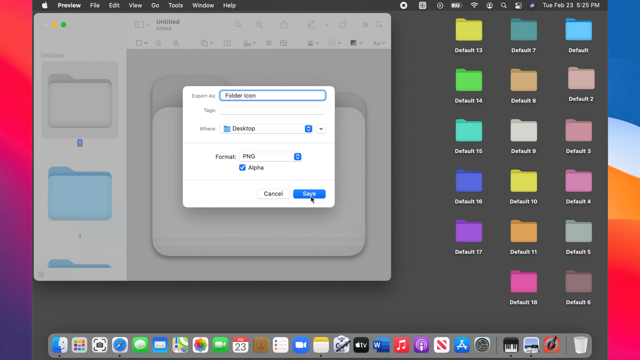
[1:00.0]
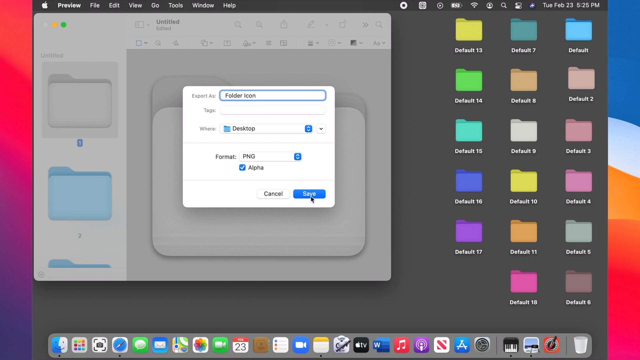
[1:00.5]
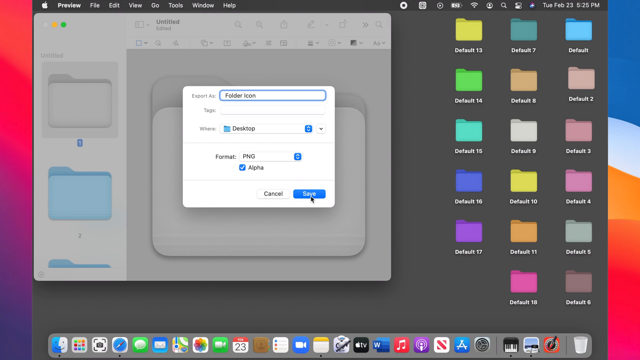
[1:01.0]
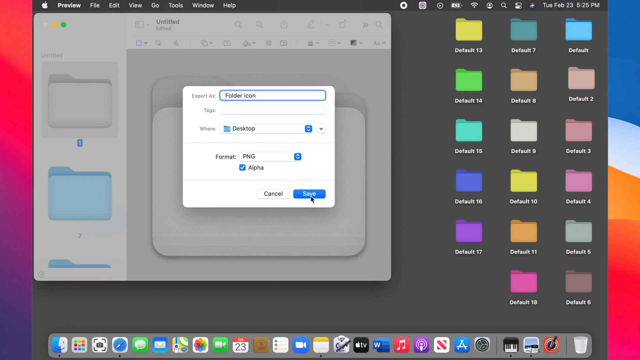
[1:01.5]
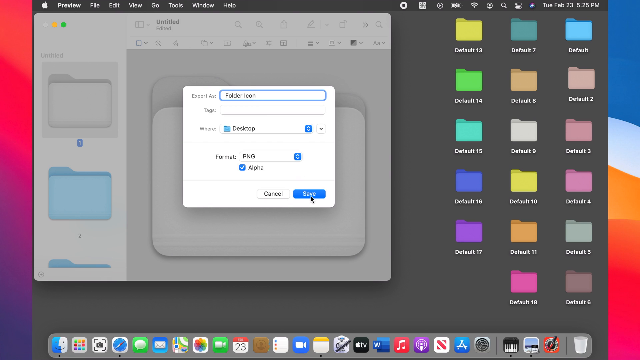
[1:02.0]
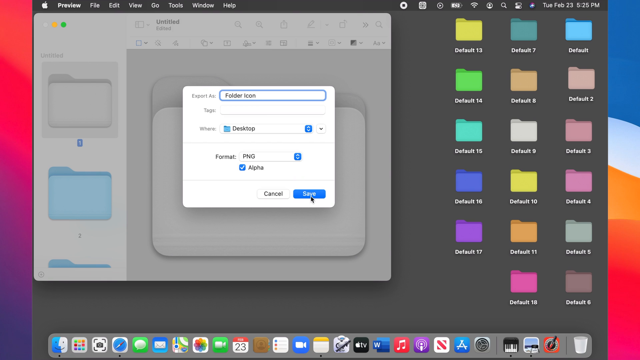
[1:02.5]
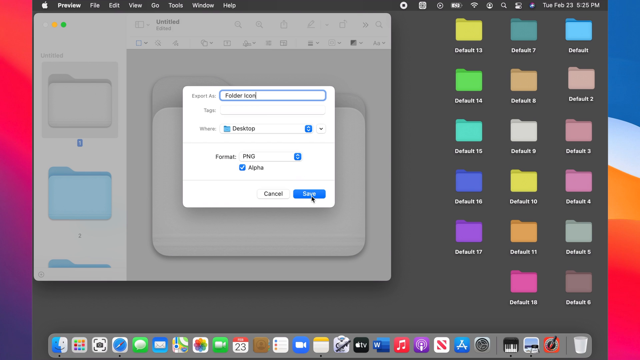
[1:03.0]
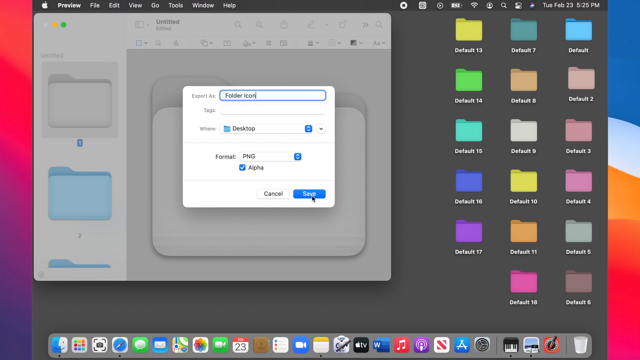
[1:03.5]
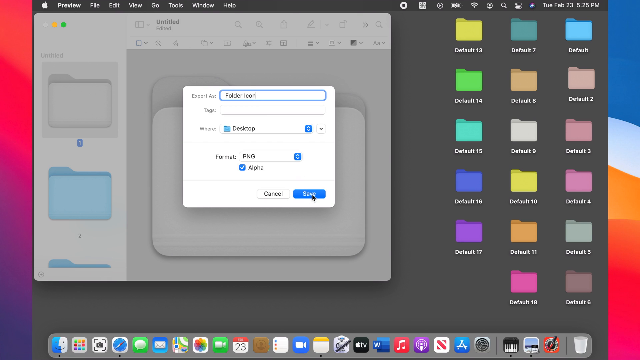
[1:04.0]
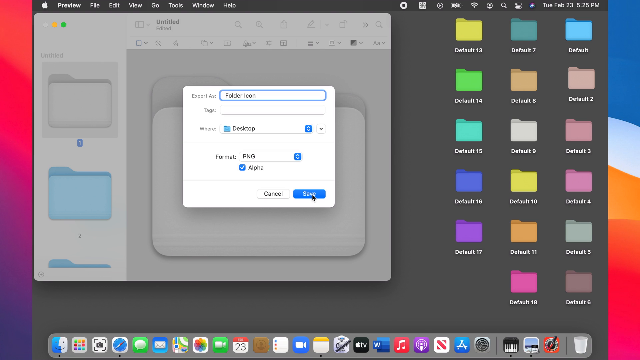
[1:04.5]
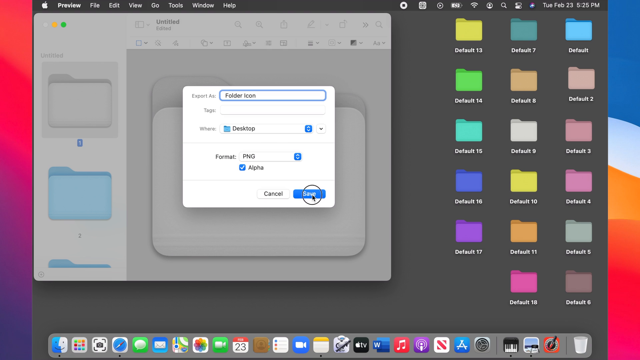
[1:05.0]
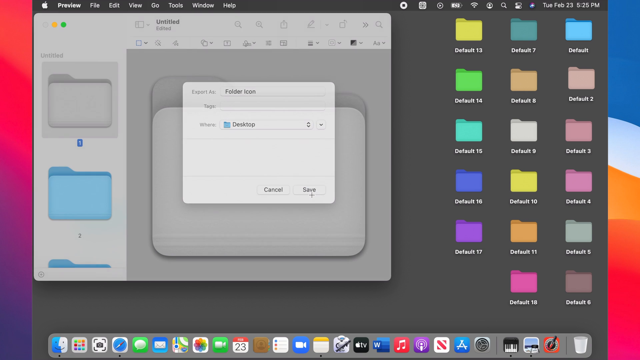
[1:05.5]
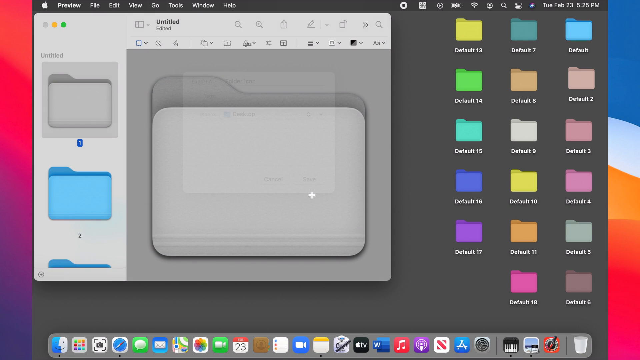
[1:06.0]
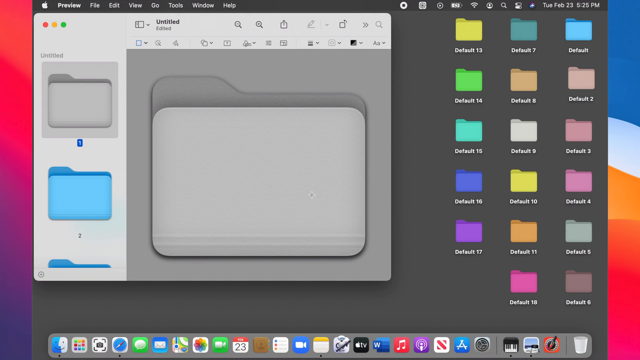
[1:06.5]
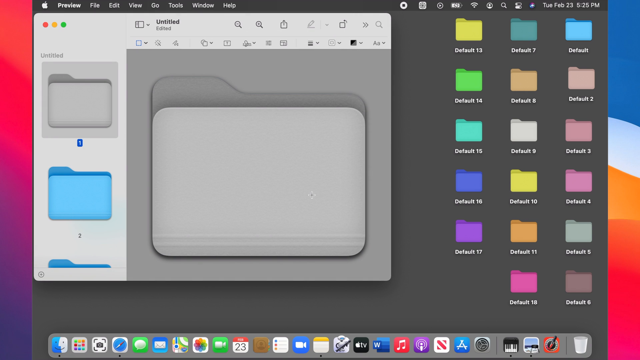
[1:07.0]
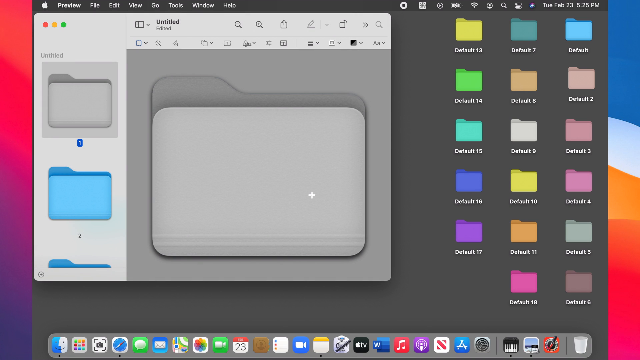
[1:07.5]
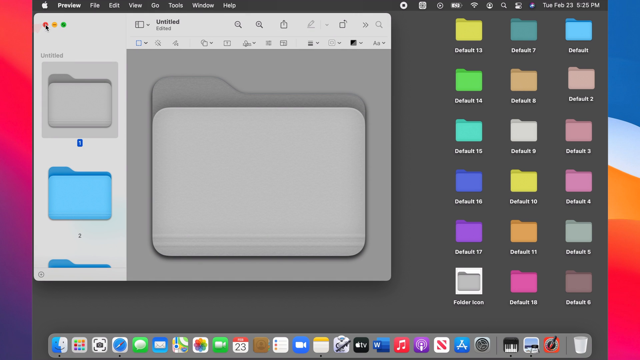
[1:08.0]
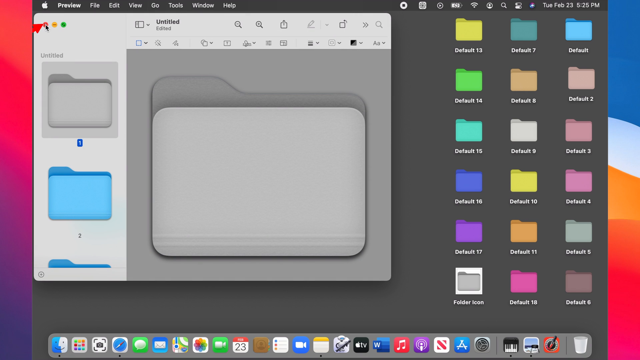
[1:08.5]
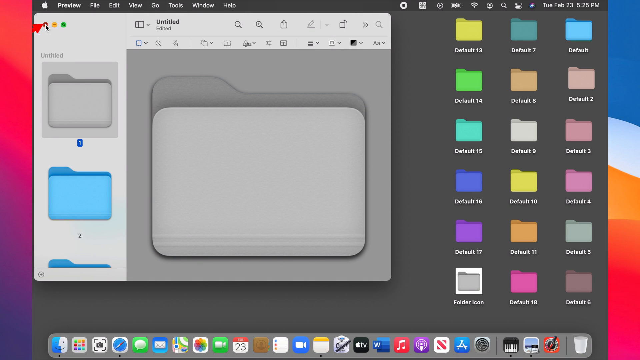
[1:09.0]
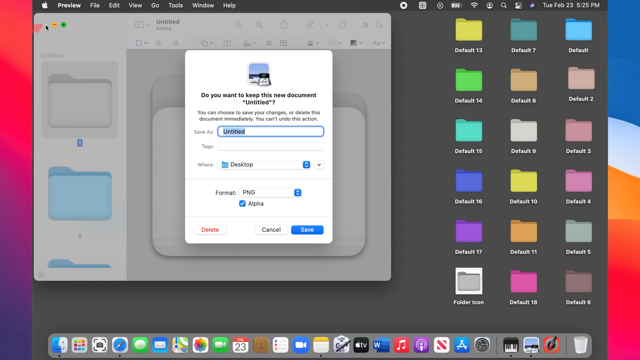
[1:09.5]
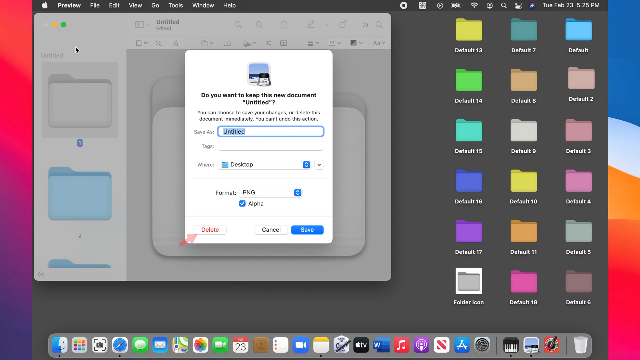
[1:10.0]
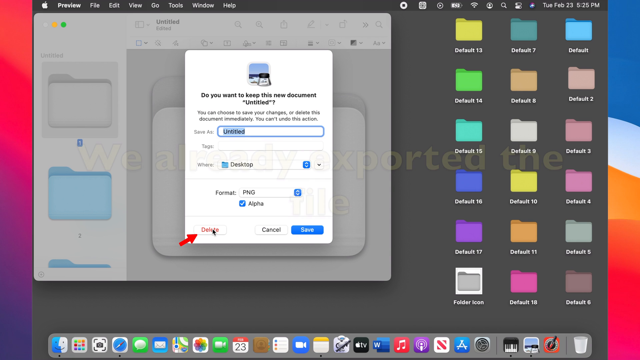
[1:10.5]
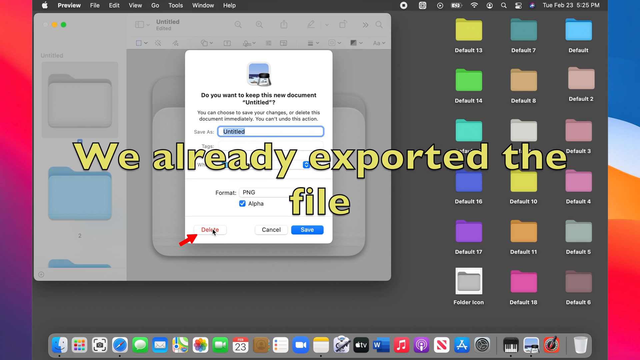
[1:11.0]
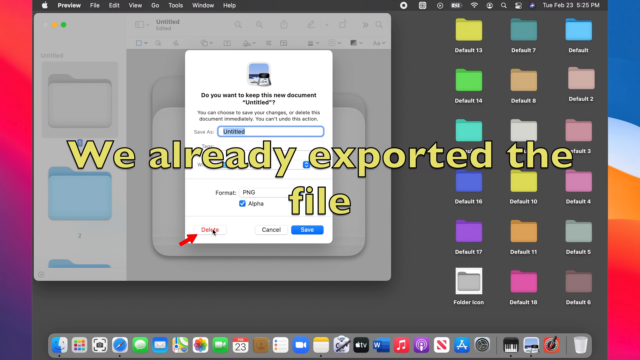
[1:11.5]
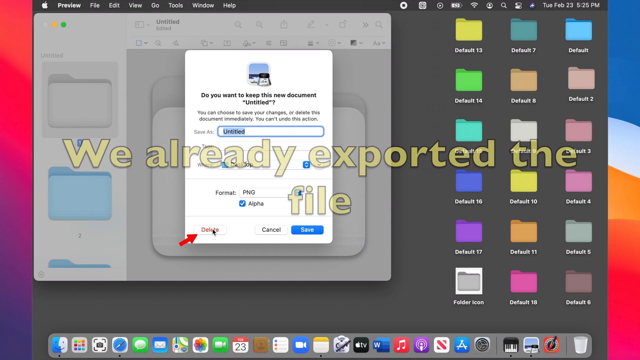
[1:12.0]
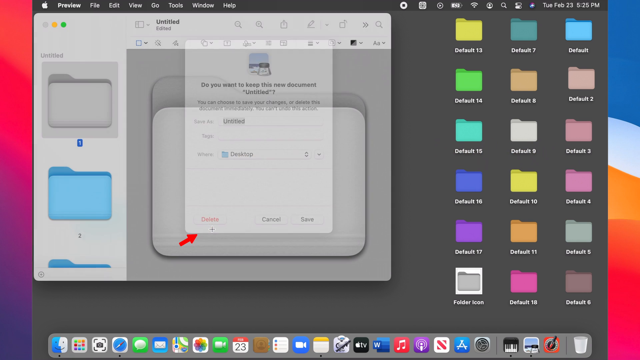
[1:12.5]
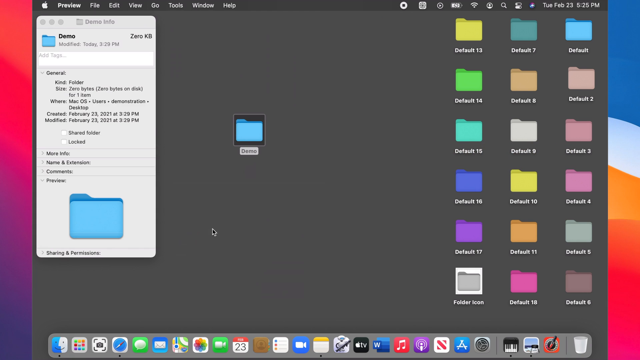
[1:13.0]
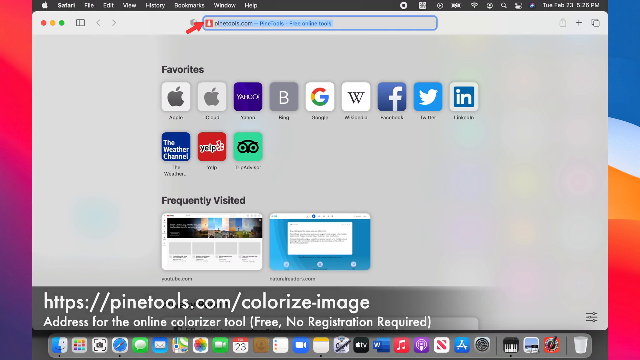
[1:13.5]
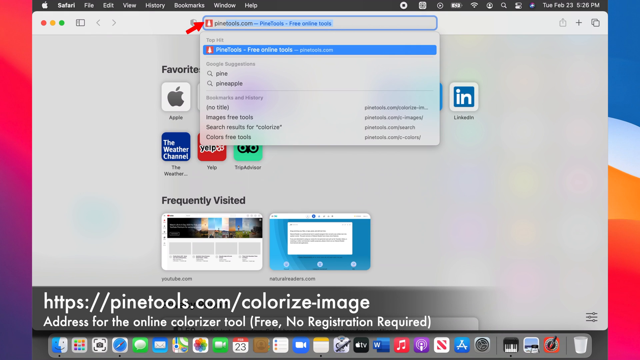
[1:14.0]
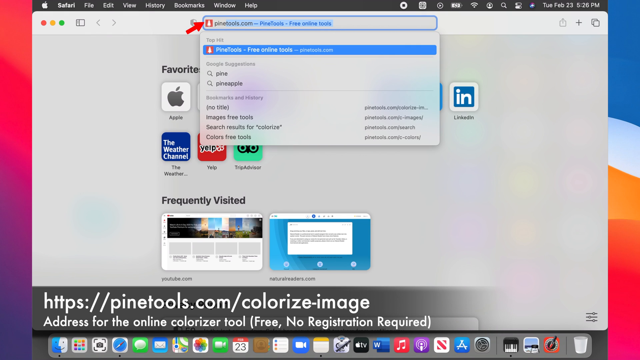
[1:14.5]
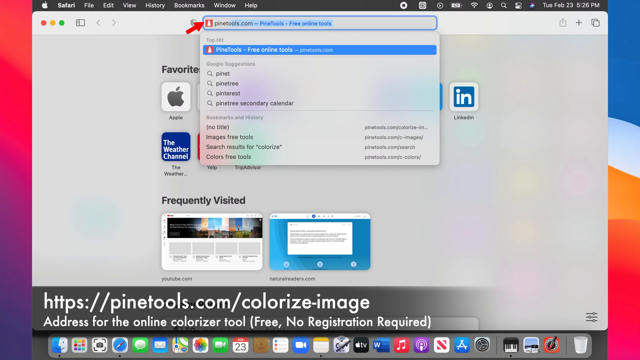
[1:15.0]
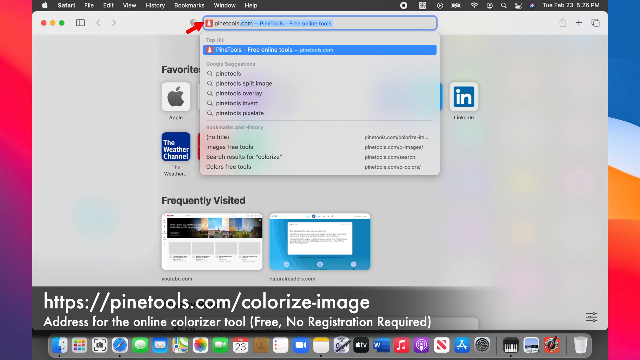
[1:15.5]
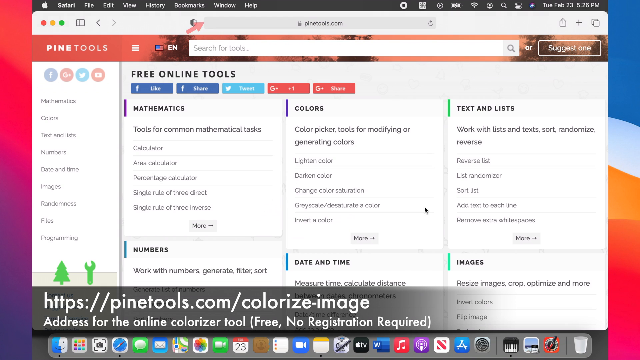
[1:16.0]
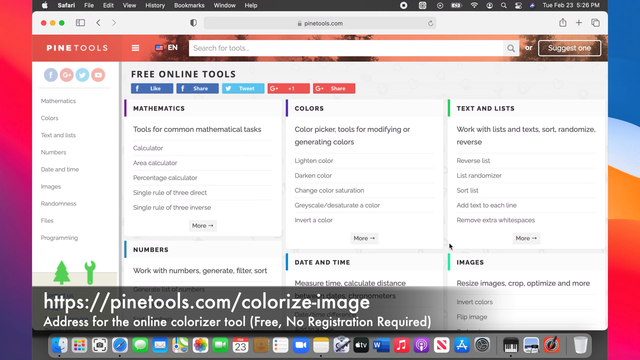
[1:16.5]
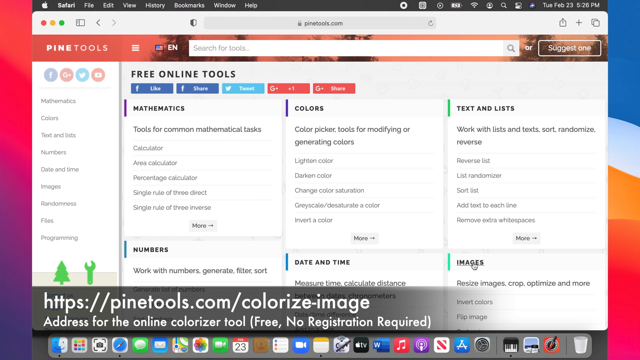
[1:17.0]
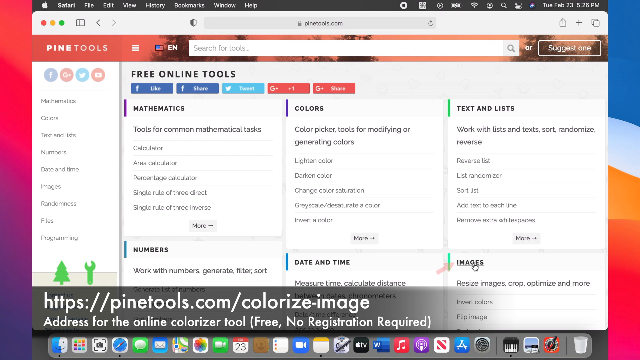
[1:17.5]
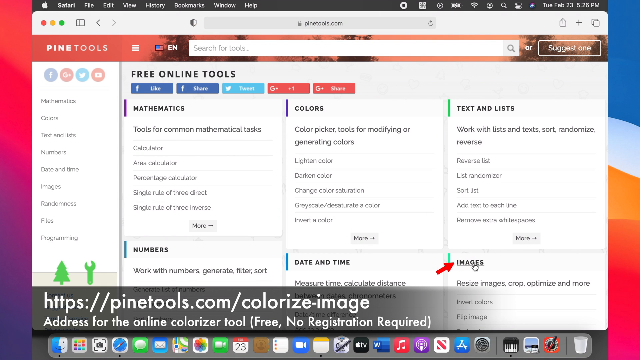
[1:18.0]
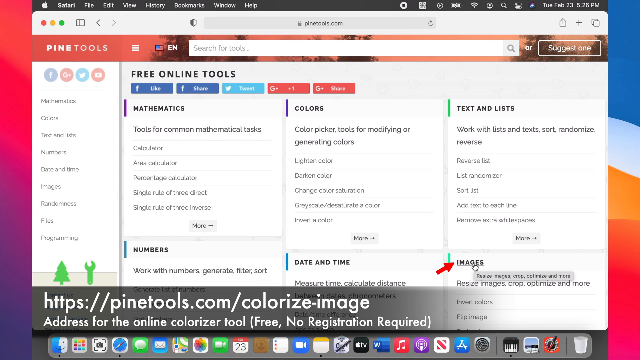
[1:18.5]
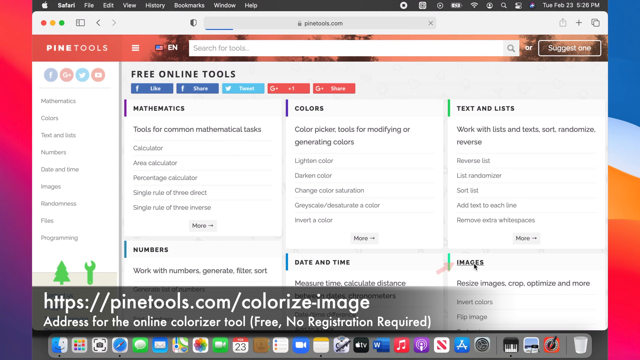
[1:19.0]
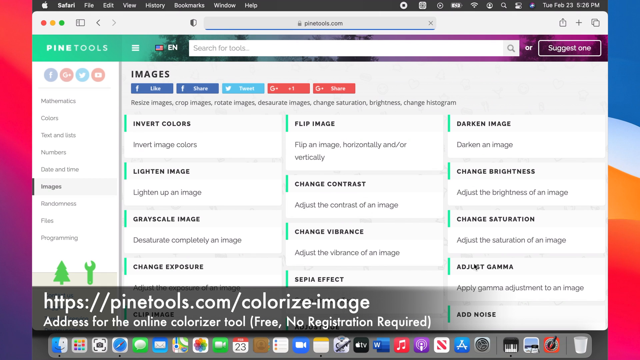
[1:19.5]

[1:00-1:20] At the "folder icon" step, the user hits Save, and a new folder is saved onto the desktop at the bottom right by the other folders. The screen shows "untitled". Yellow text kind of flashes on top of the desktop: "we already exported the file". At the bottom of the screen is the address "HTTPS;\\PineTools.com\colorized-image". At the top of the screen the user clicks a button leading to "free online tools" and then "images", and then returns to the folder icon.